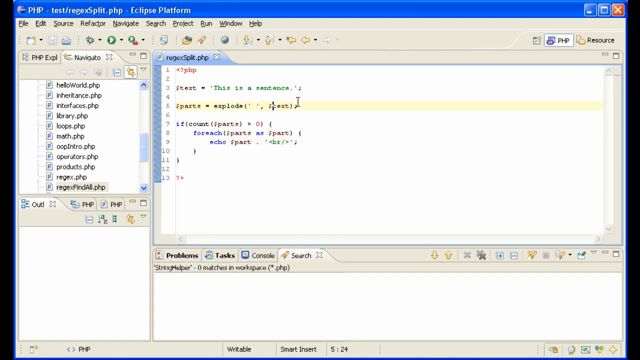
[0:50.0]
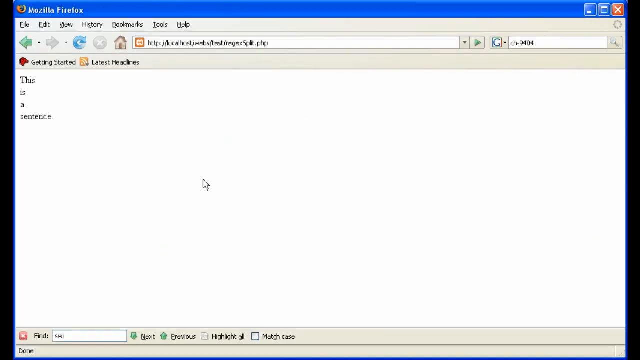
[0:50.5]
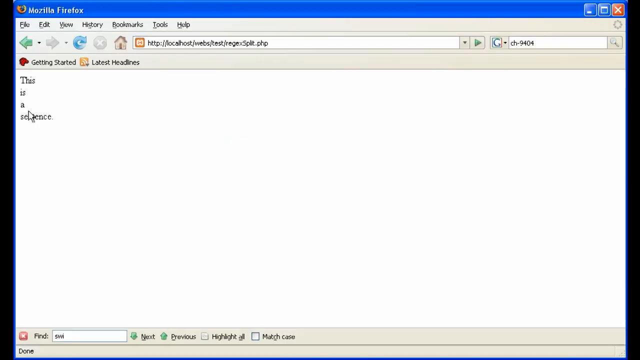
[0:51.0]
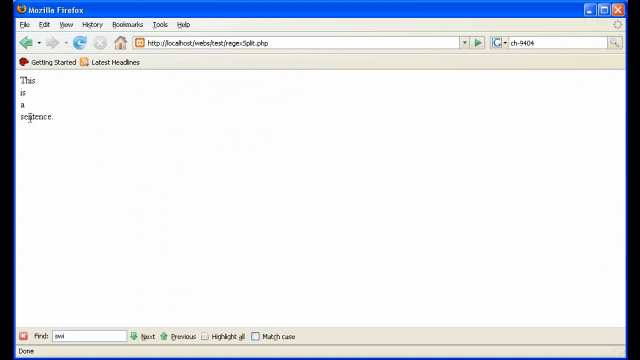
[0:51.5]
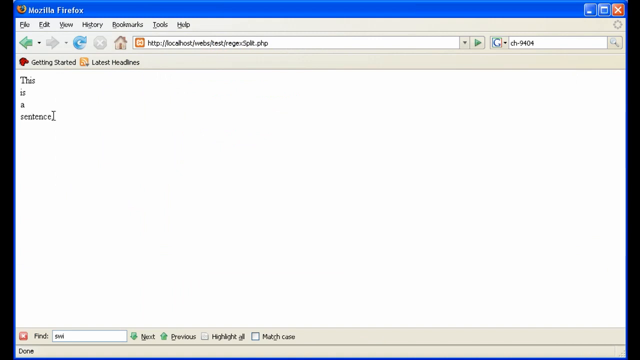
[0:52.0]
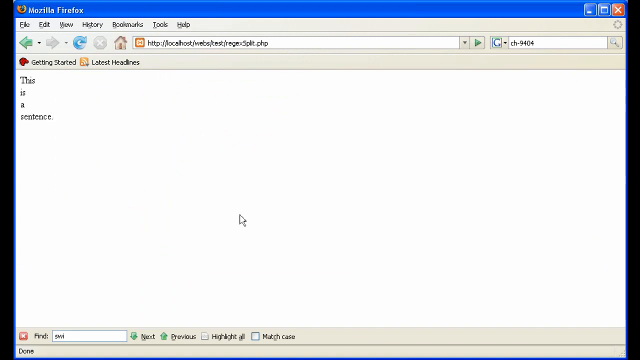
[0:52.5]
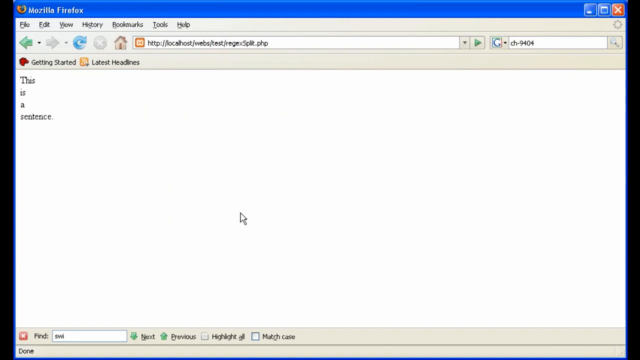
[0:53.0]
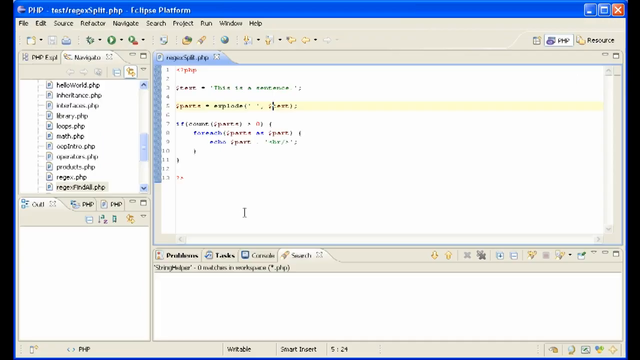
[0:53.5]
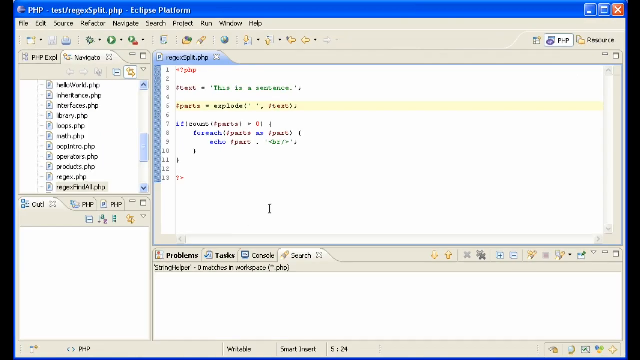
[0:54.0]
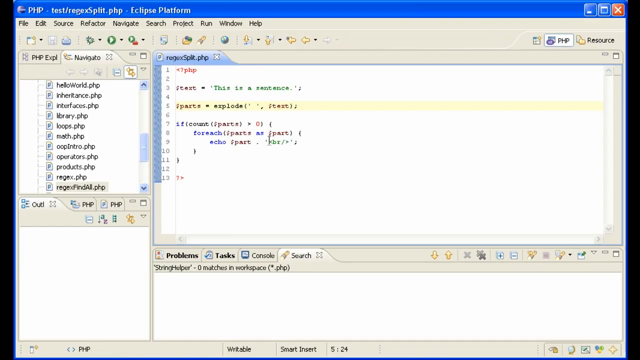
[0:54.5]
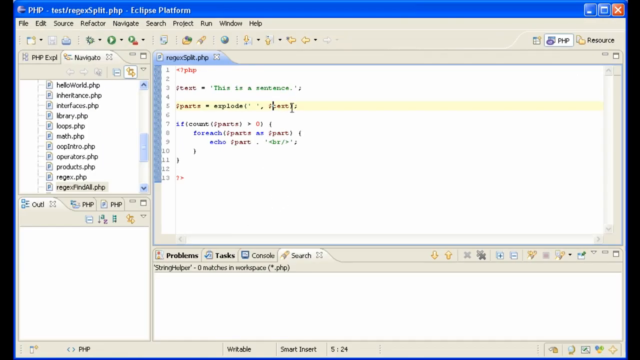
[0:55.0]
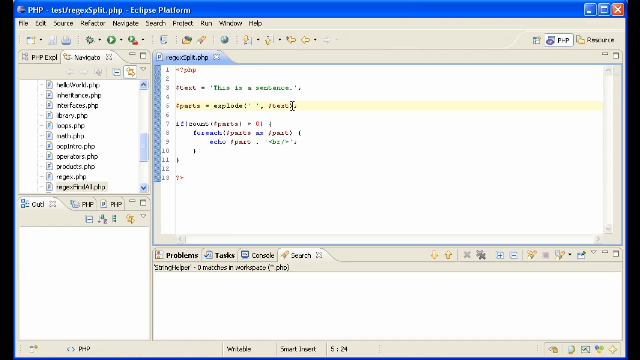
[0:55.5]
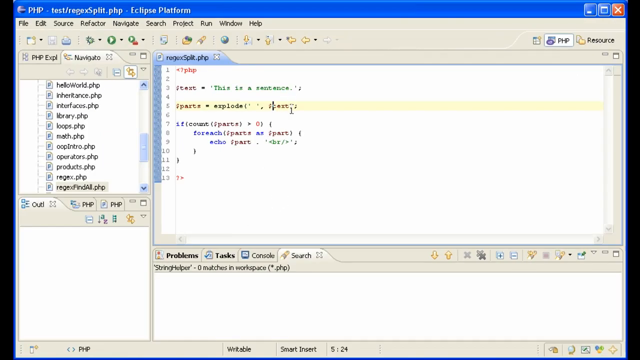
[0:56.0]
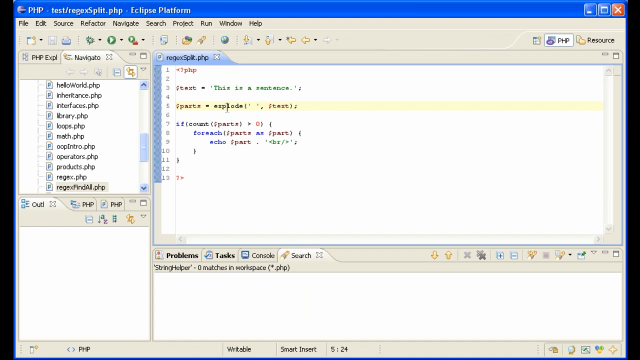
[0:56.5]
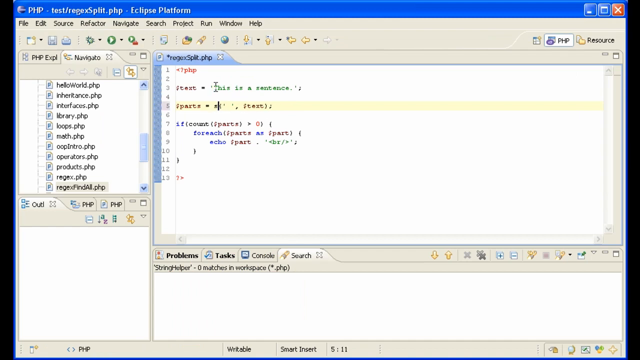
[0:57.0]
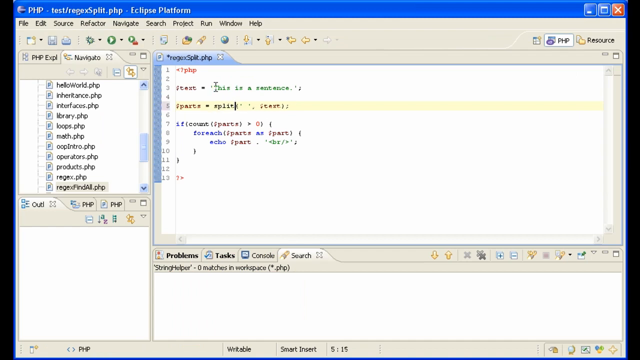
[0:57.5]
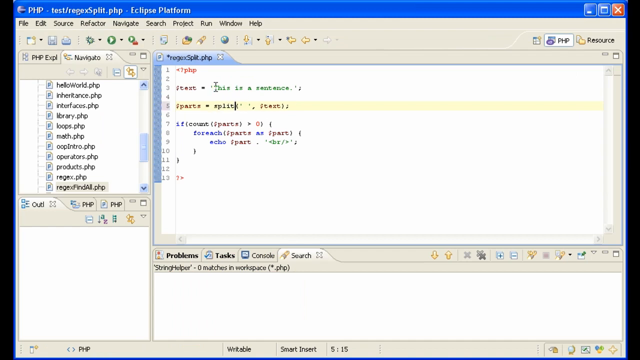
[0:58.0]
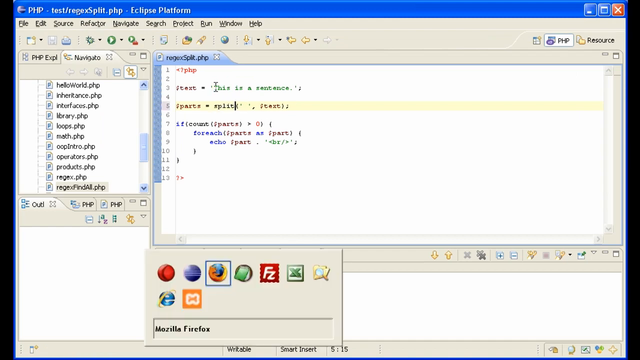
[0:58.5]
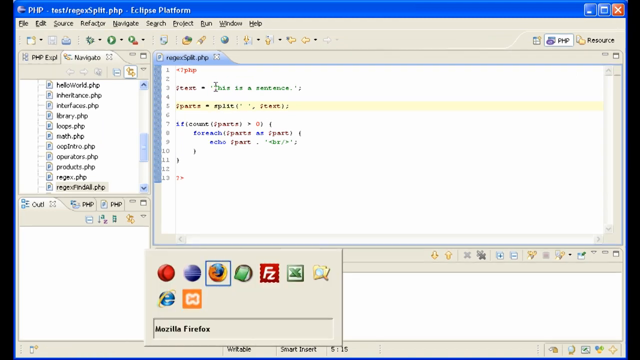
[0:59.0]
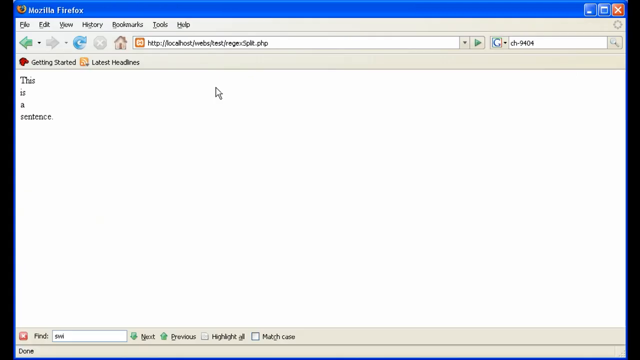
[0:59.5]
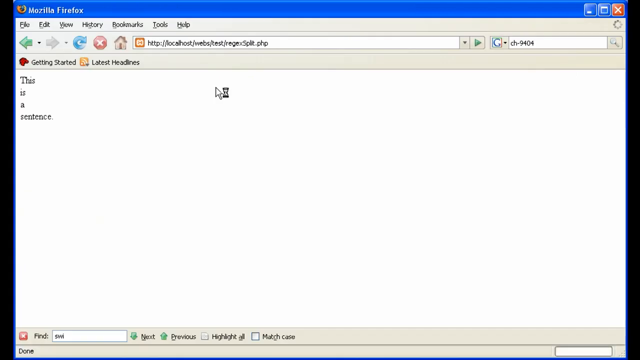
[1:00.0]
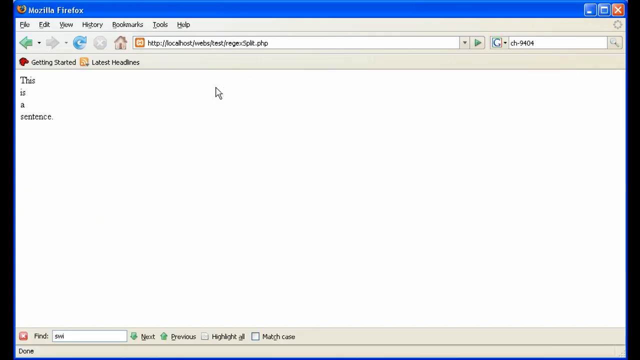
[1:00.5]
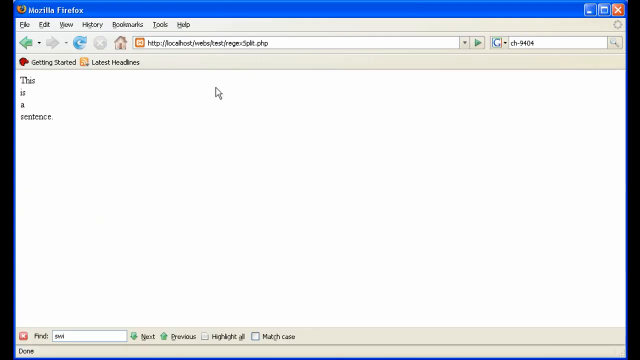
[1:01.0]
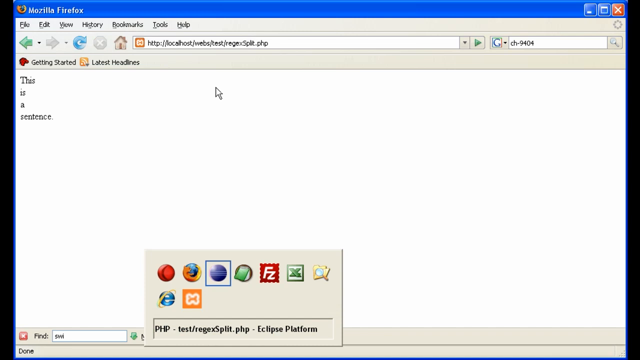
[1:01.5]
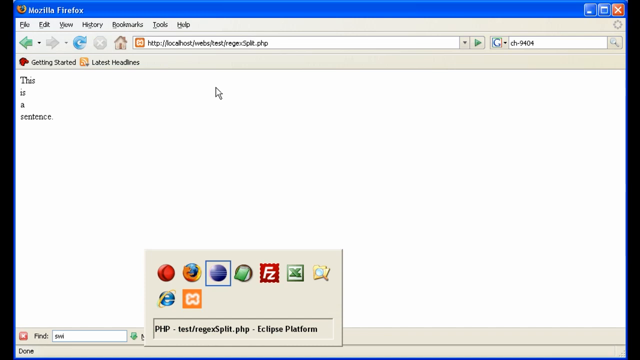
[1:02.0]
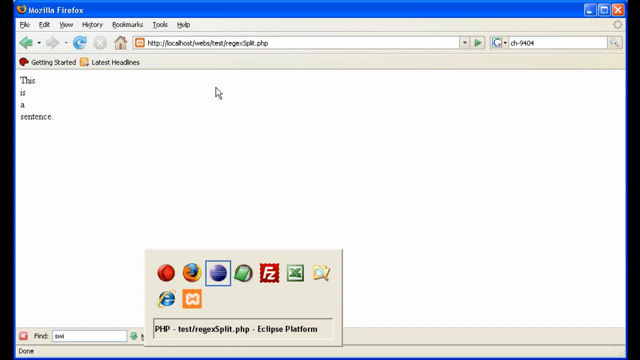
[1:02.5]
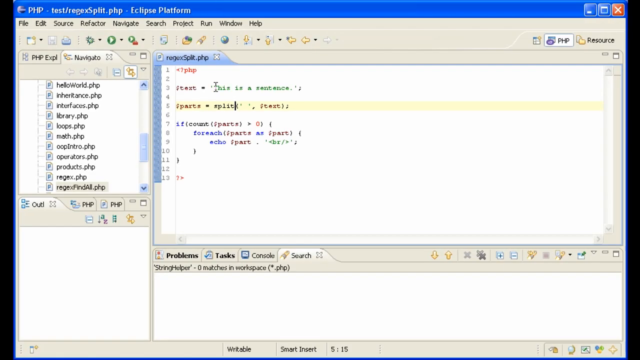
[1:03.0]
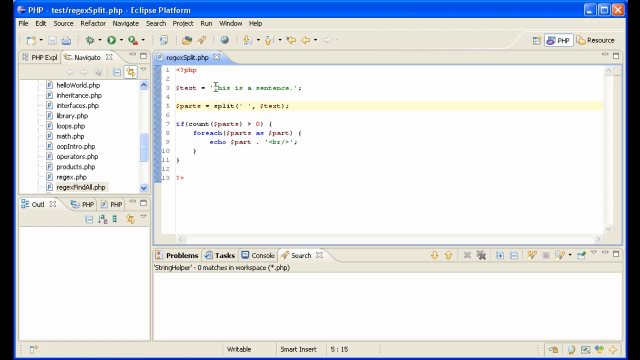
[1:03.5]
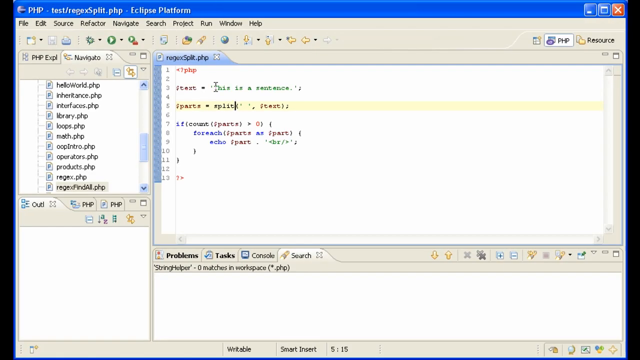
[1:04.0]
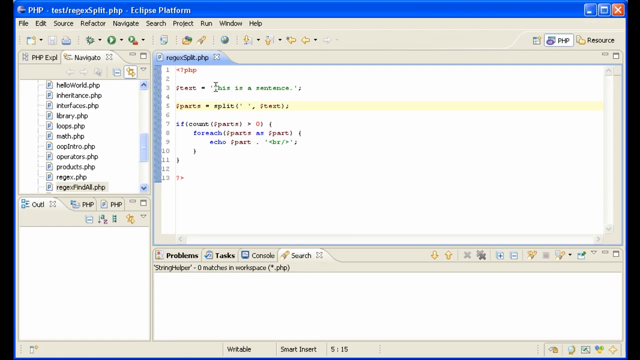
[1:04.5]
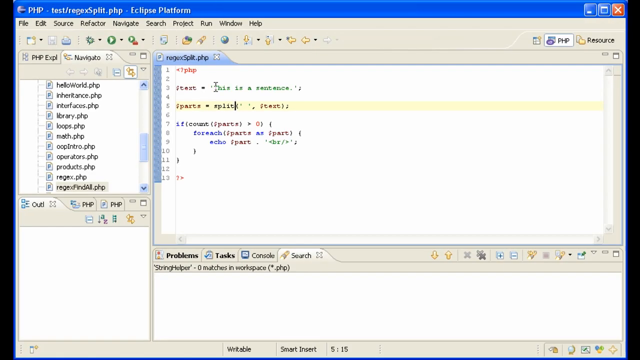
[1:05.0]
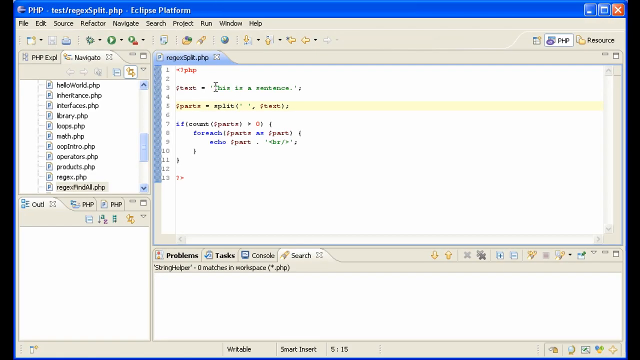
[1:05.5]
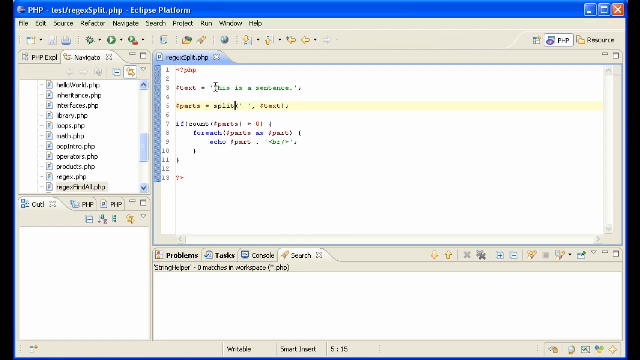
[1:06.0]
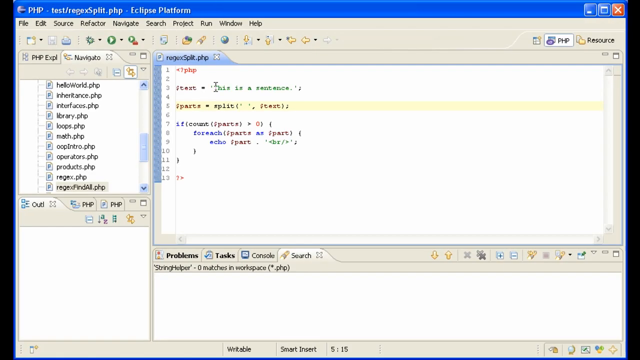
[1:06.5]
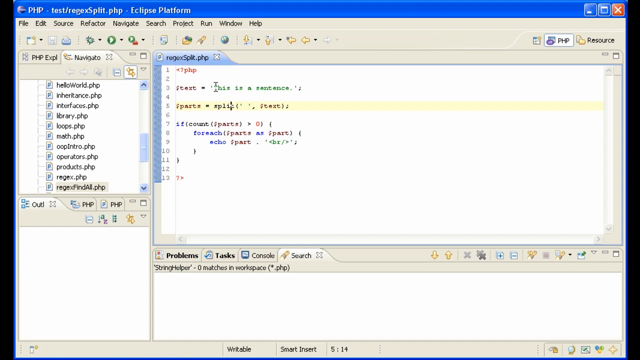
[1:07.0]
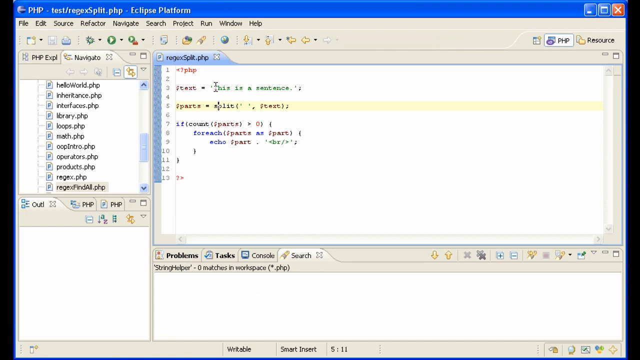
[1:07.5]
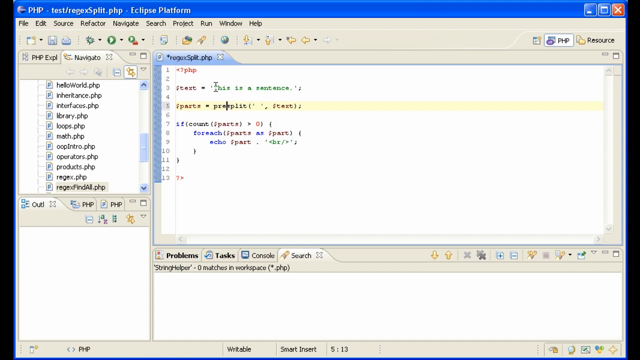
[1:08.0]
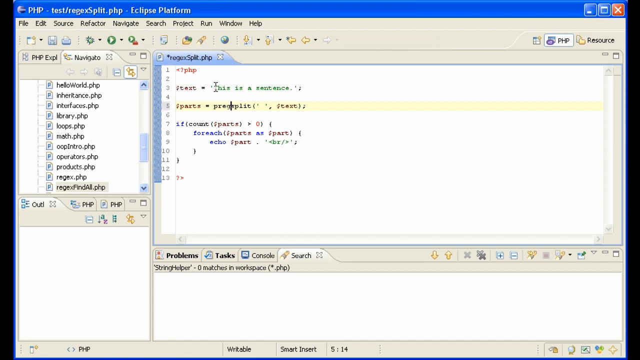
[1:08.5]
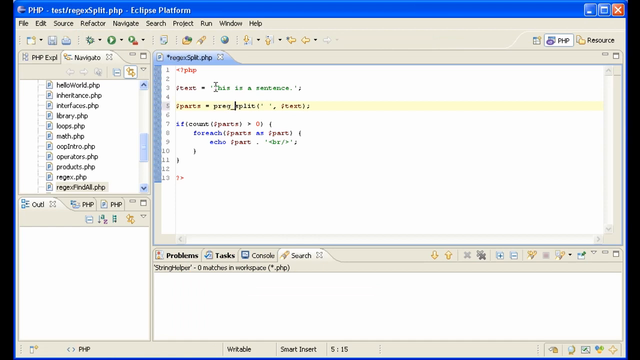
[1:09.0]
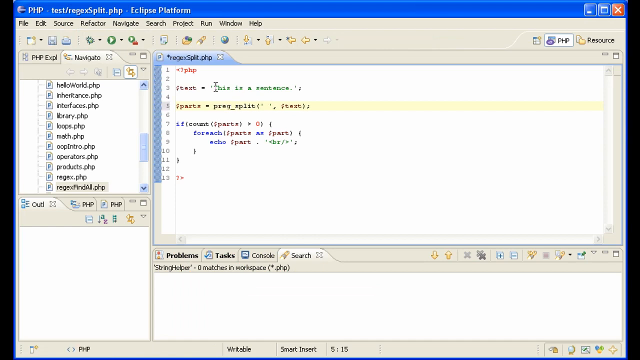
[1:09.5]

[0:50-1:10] Mozilla Firefox is brought up again, and the cursor hovers over the "this is a sentence" output on the page. The view switches back to the IDE, showing the variable again. The word explode is replaced with split. The file is saved, Firefox is opened and the page reloaded; the same output remains, with "this is a sentence" on separate lines. The cursor blinks after split, and after a while the word split is prefixed with "preg_".